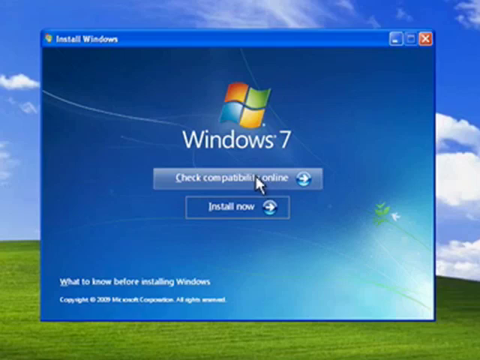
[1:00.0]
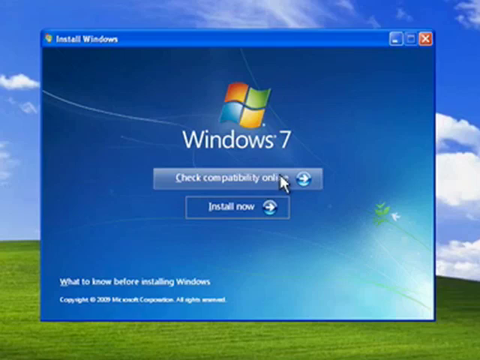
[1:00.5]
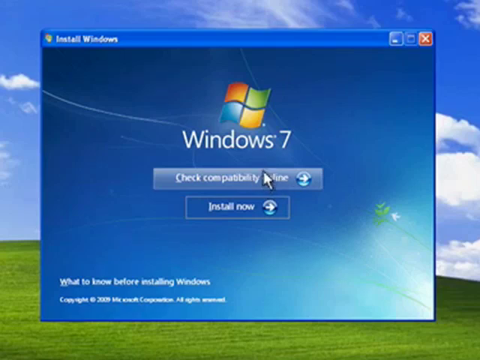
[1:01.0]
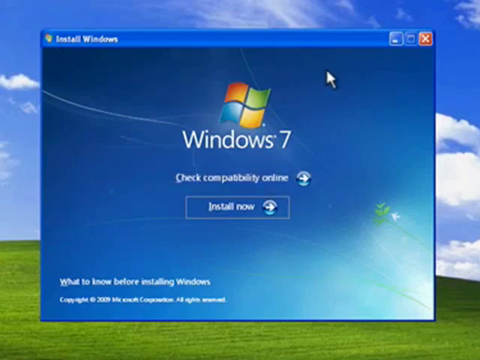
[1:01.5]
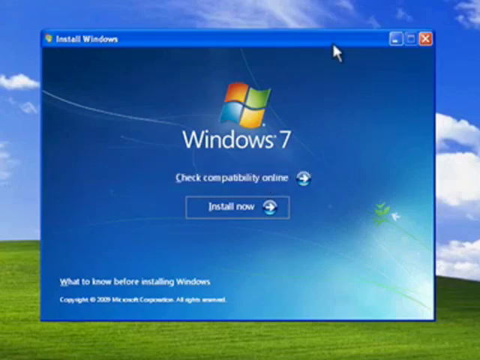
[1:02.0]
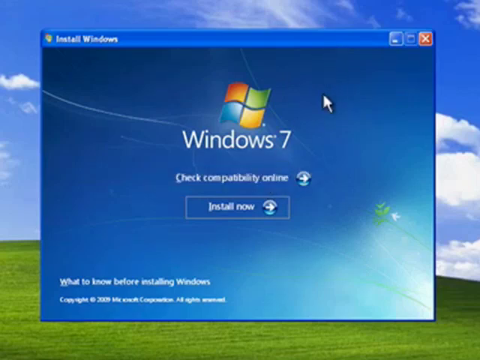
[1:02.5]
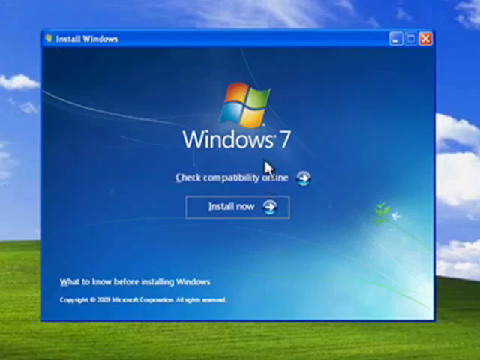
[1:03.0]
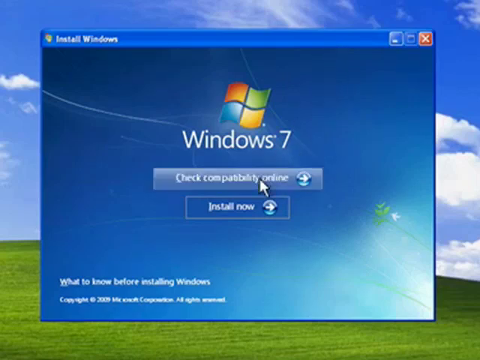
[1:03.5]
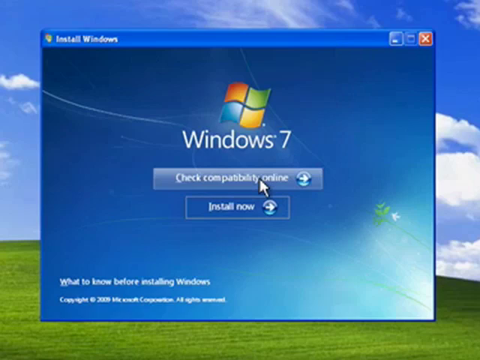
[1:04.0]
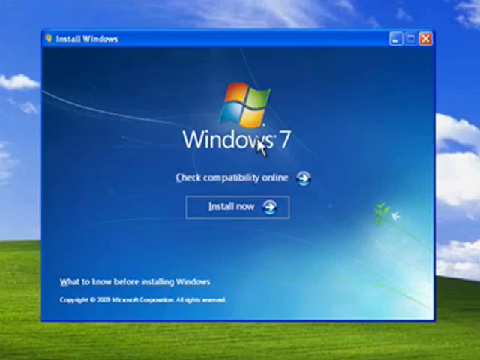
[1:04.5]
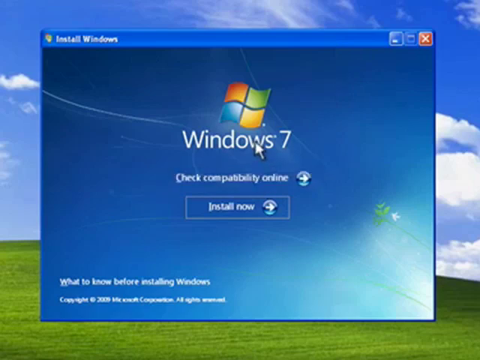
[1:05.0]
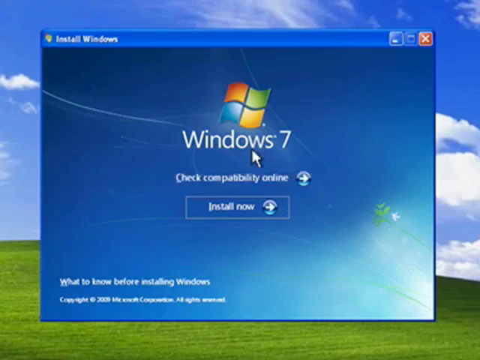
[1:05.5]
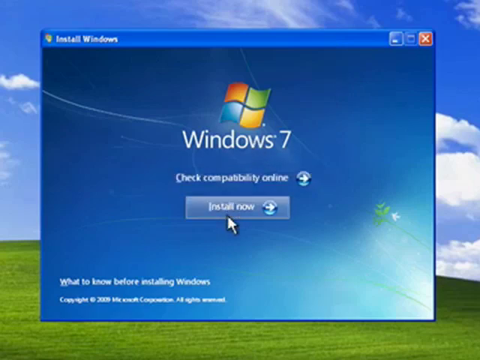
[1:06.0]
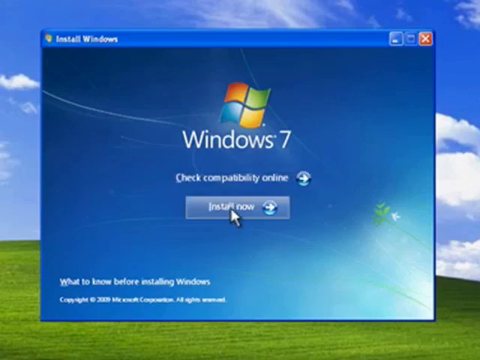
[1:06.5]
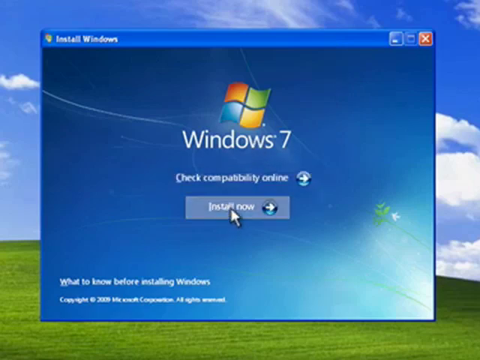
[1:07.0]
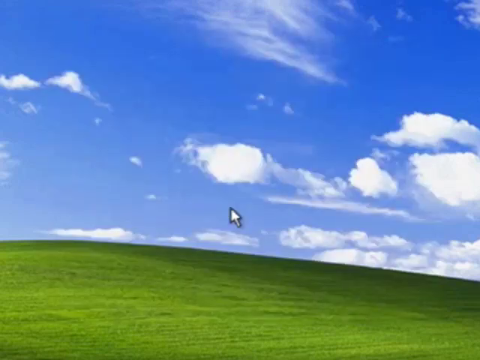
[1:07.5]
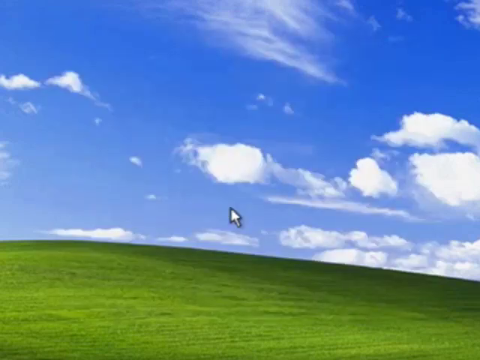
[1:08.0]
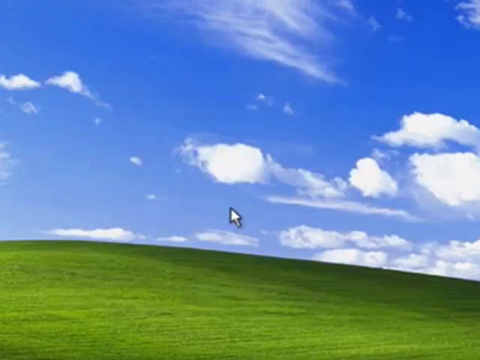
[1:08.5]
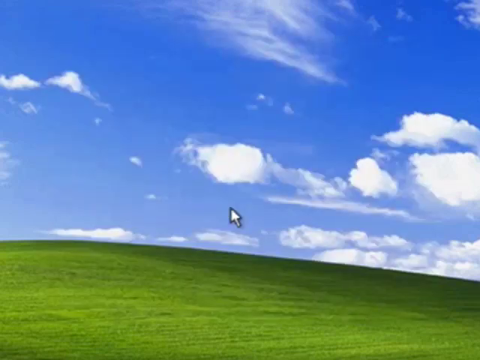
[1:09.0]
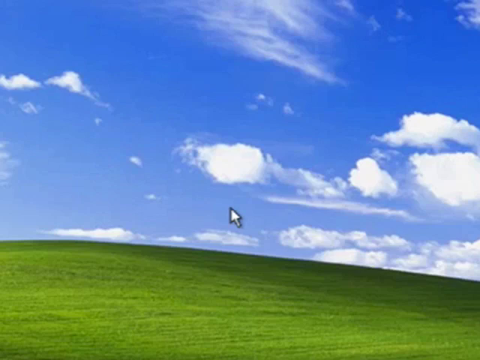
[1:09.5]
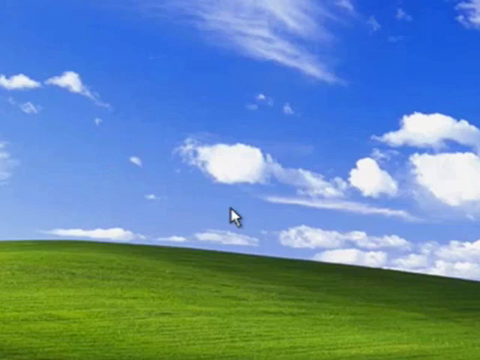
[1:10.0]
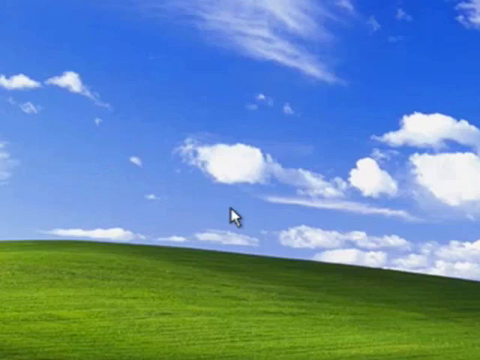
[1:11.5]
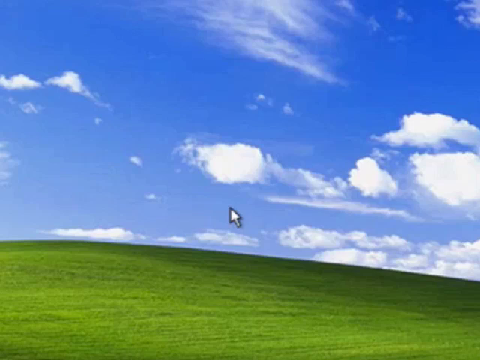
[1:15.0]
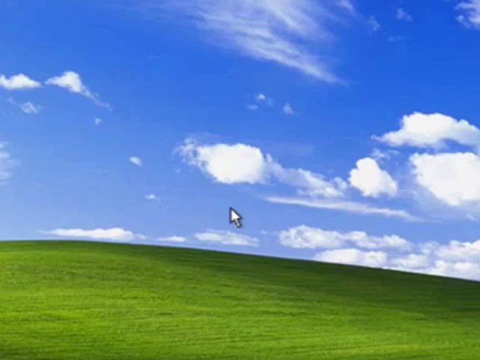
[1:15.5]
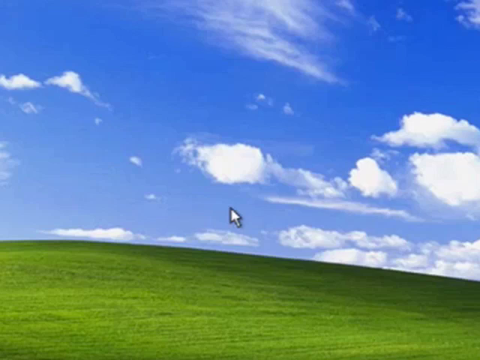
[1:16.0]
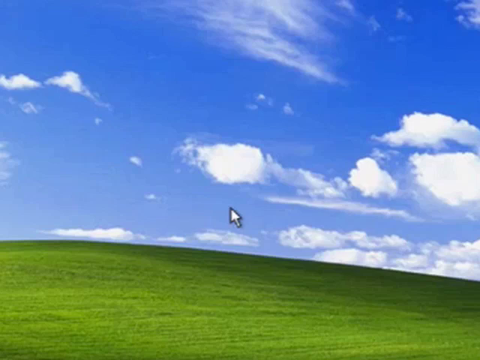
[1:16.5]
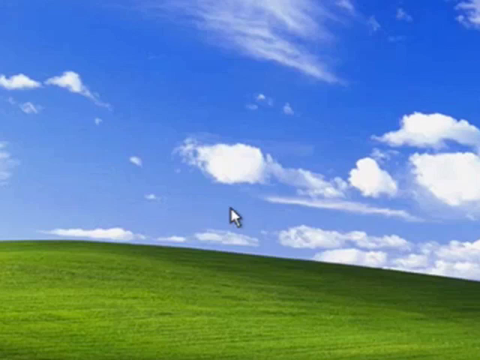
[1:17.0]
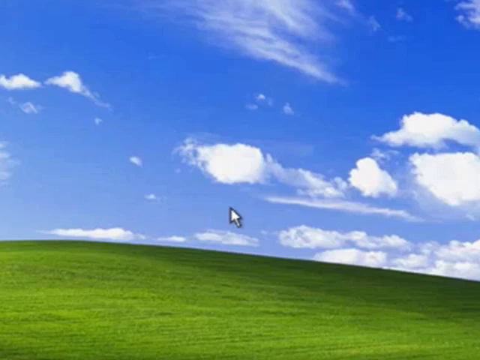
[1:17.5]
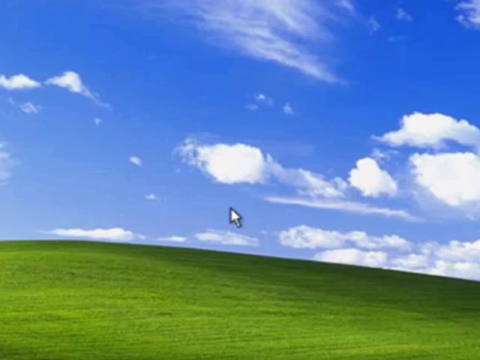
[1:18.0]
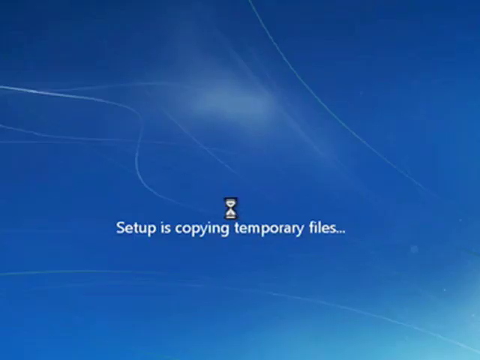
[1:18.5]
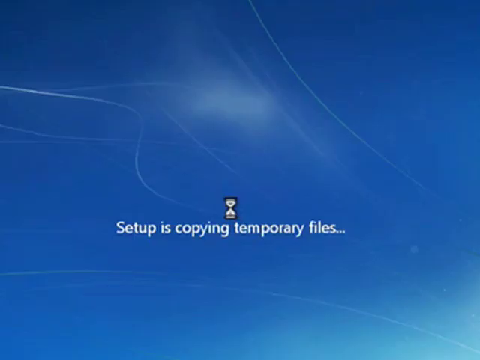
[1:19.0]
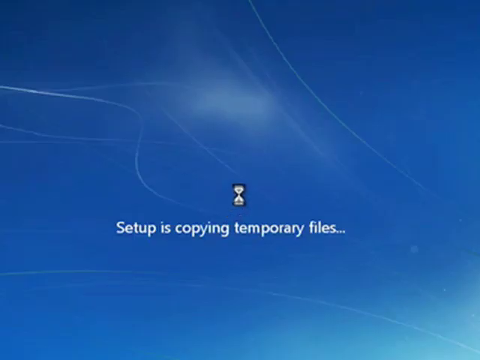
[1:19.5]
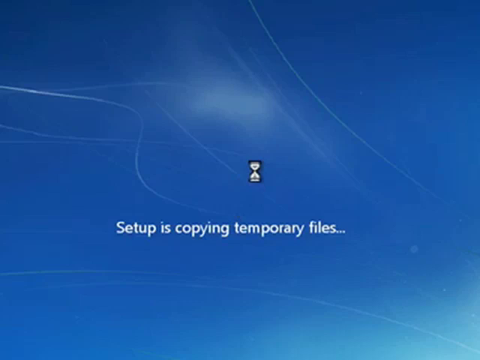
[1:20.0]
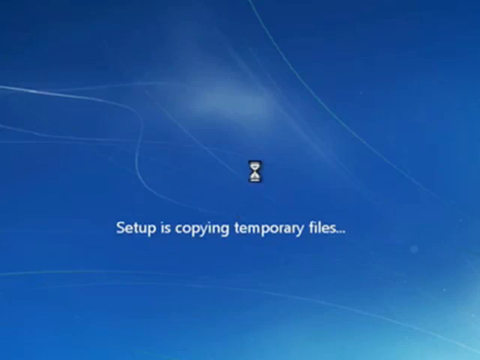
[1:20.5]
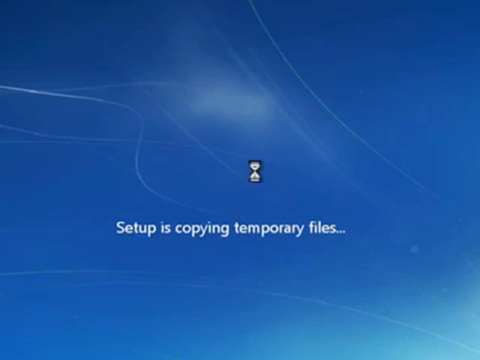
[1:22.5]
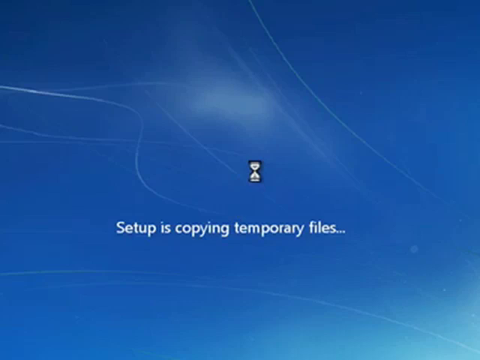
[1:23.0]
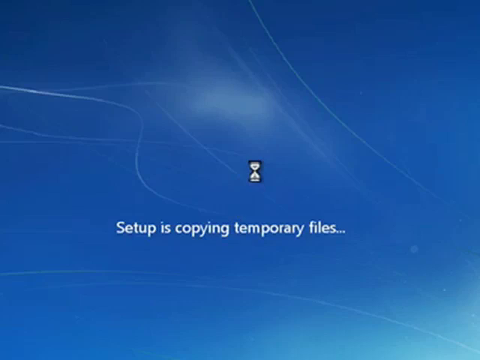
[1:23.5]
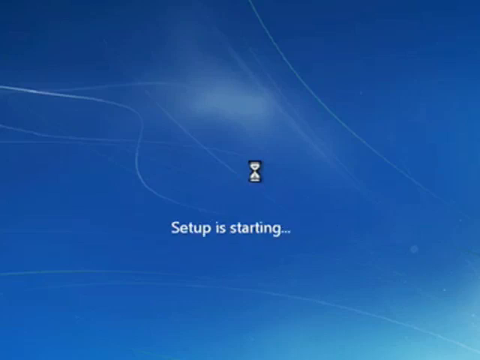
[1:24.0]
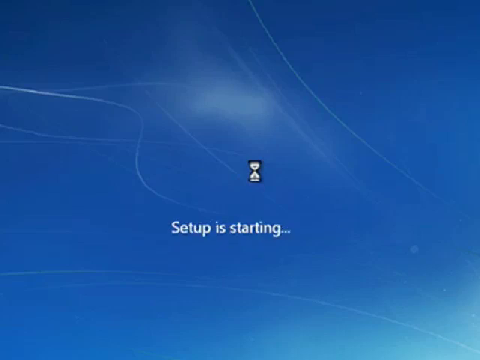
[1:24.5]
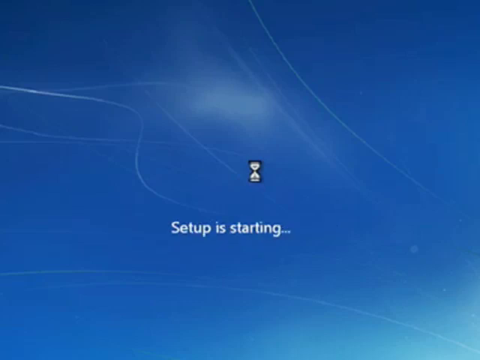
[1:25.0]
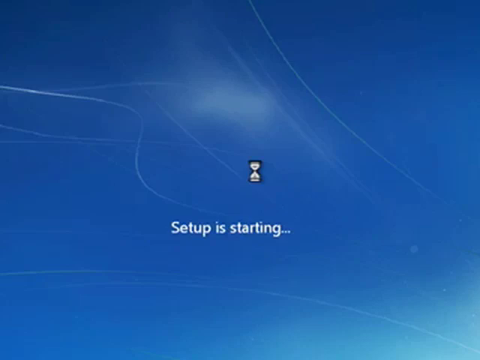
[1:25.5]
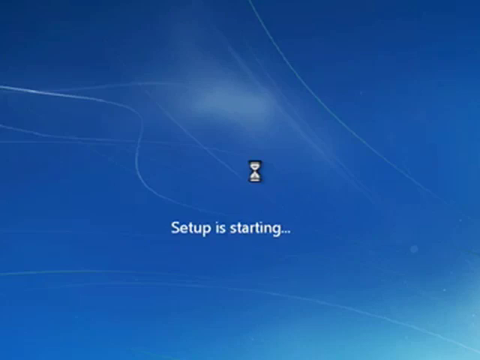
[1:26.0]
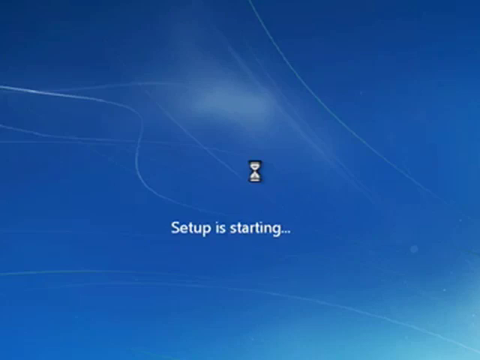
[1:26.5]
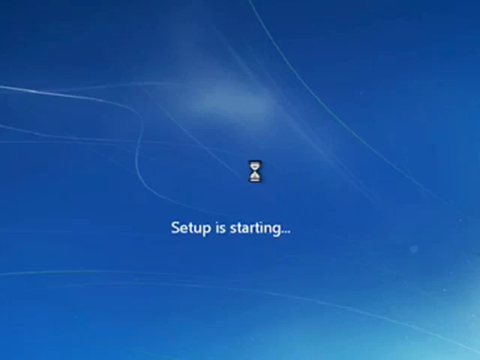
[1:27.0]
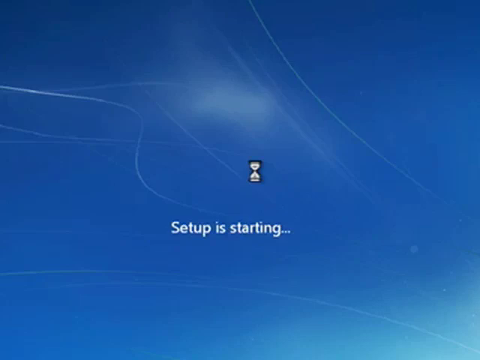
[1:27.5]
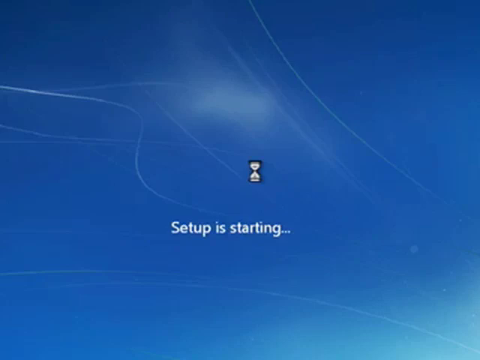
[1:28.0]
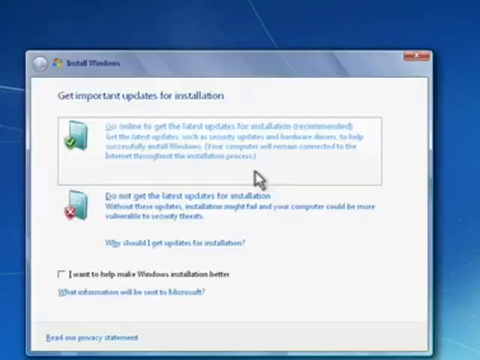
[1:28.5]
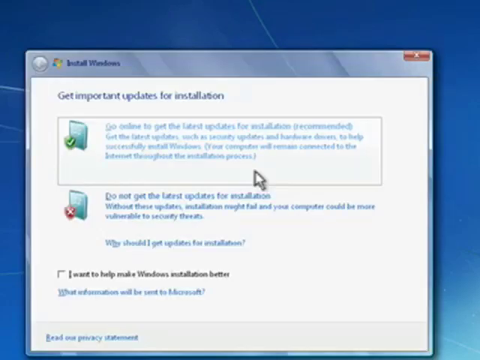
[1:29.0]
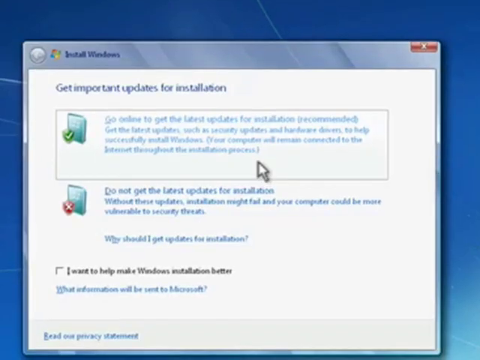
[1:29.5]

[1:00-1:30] A Windows 7 page is open on the computer, with "install Windows" in the upper left-hand corner. The white pointer cursor is on "check compatibility online," and right underneath is a button that says "install now." In the lower right-hand corner it says "what to know before installing Windows." The person shows the different areas and then clicks on install now. There is a pause where nothing is visible except the clouds and green grass of the background. An hourglass moves and the screen says "setup is copying temporary files," then "setup is starting." After another pause, a box comes up right at the end as the Windows 7 installation progresses.